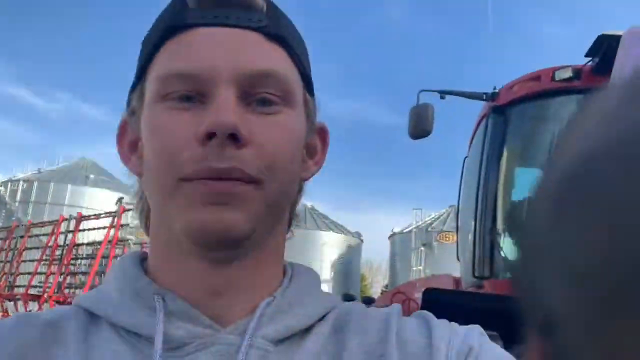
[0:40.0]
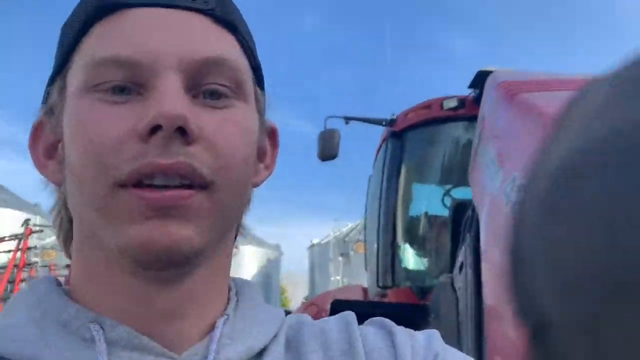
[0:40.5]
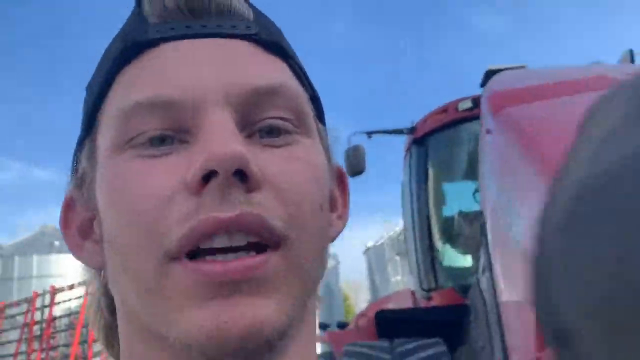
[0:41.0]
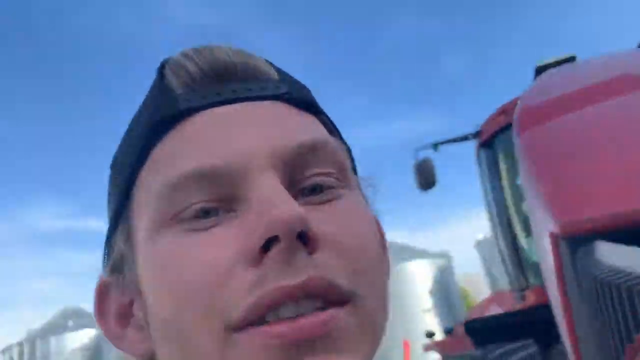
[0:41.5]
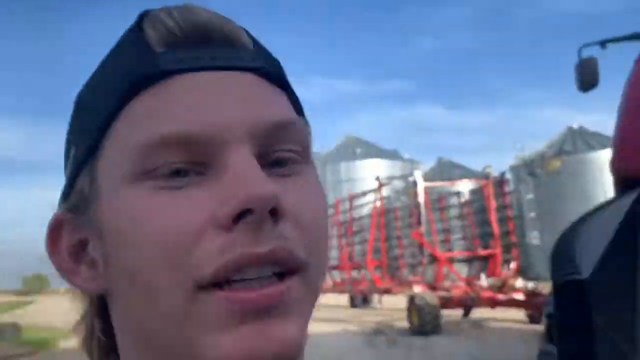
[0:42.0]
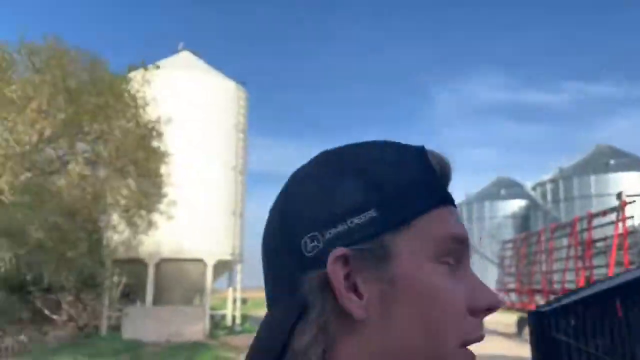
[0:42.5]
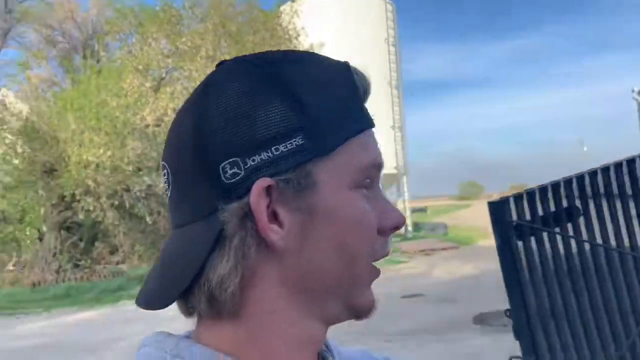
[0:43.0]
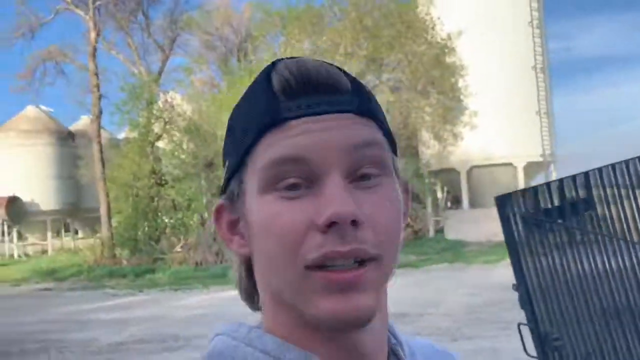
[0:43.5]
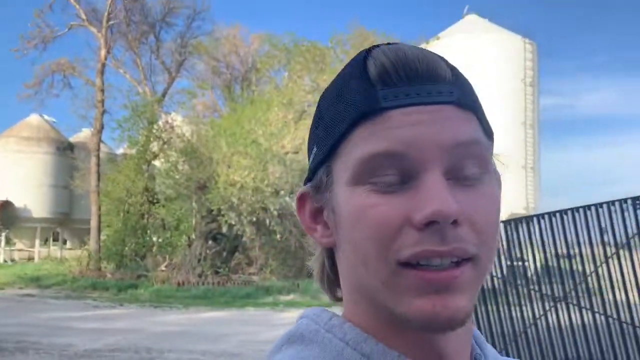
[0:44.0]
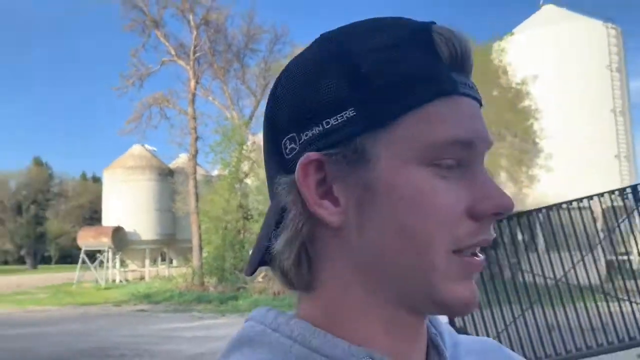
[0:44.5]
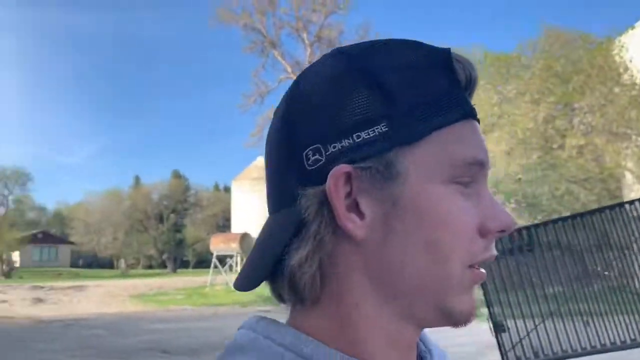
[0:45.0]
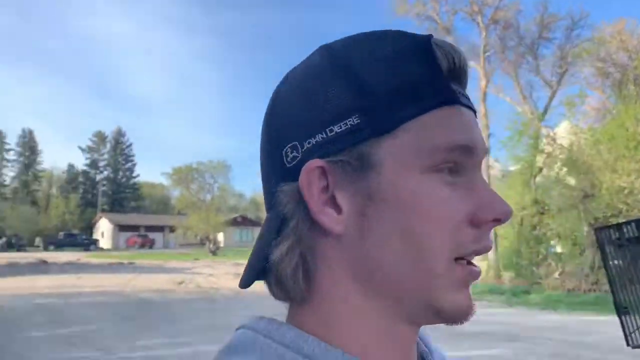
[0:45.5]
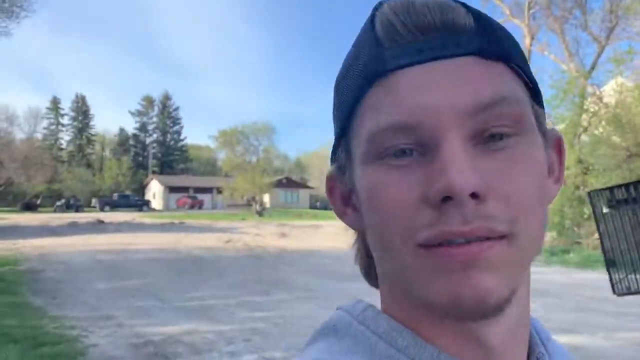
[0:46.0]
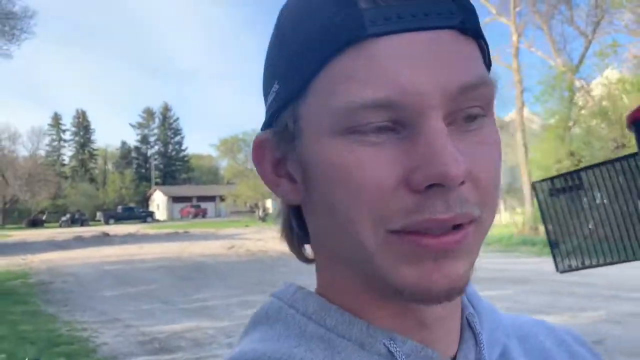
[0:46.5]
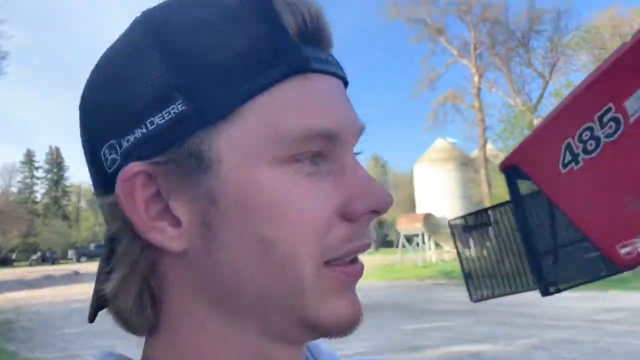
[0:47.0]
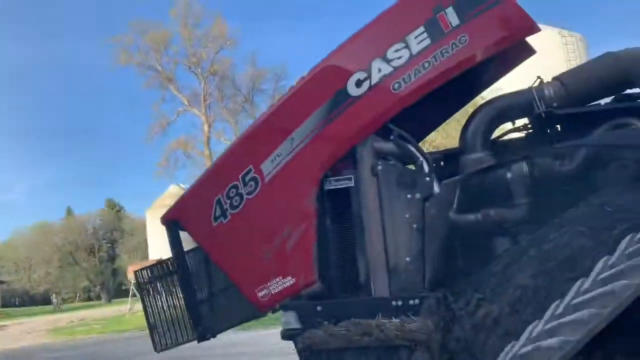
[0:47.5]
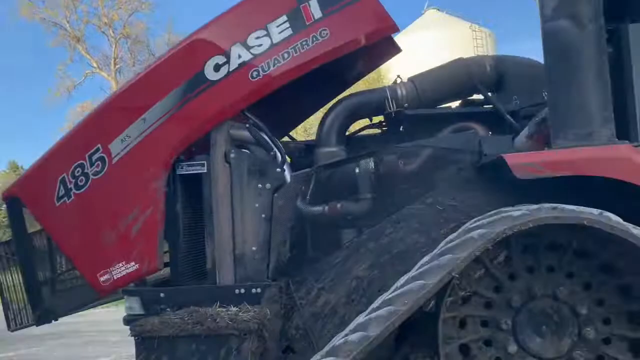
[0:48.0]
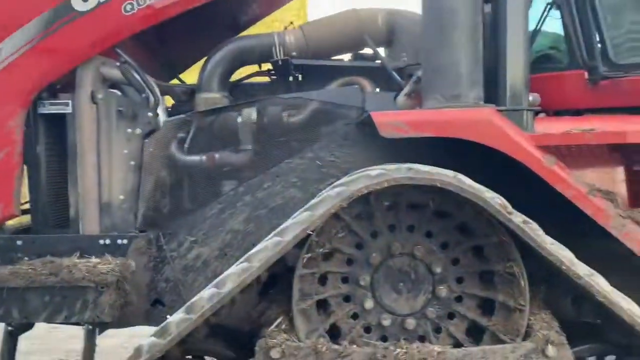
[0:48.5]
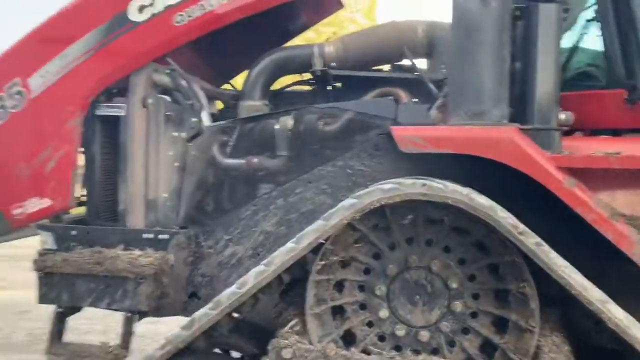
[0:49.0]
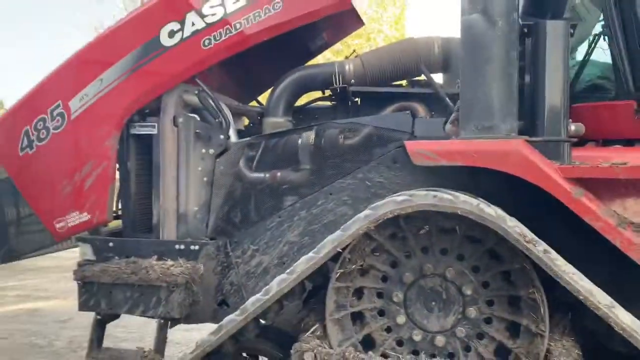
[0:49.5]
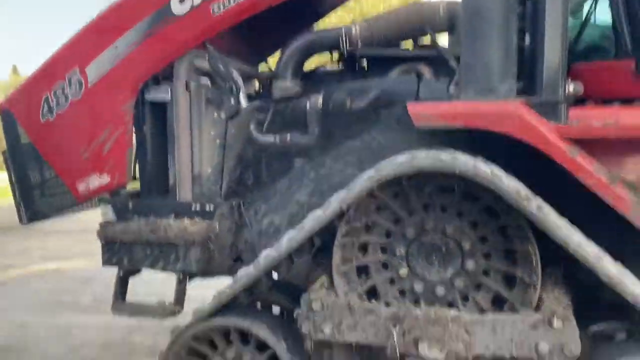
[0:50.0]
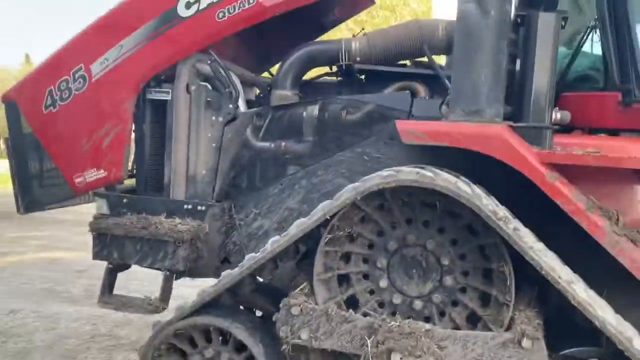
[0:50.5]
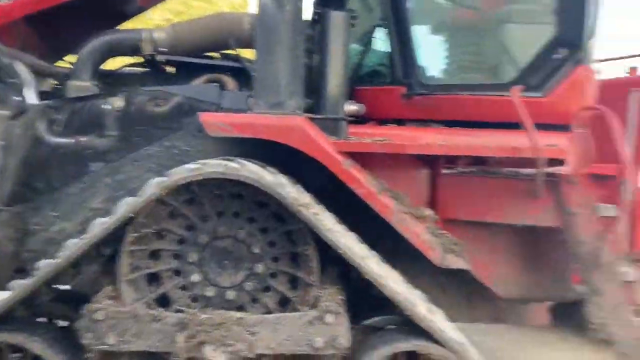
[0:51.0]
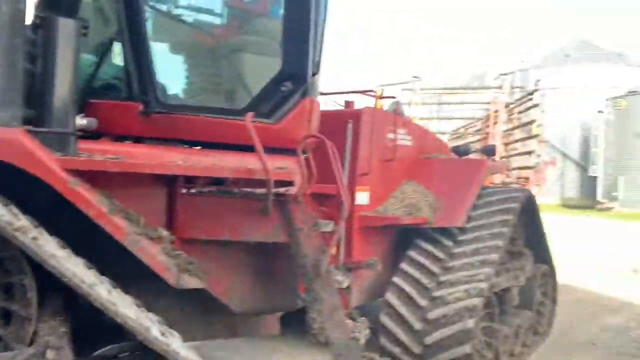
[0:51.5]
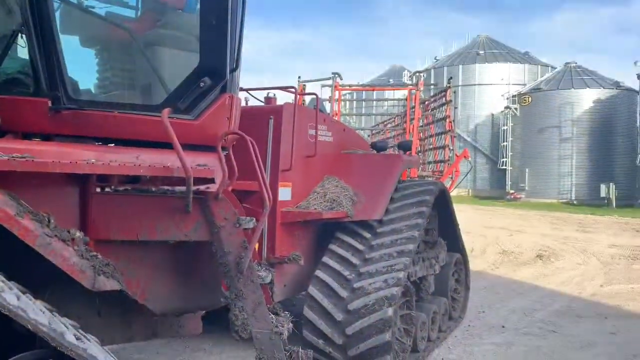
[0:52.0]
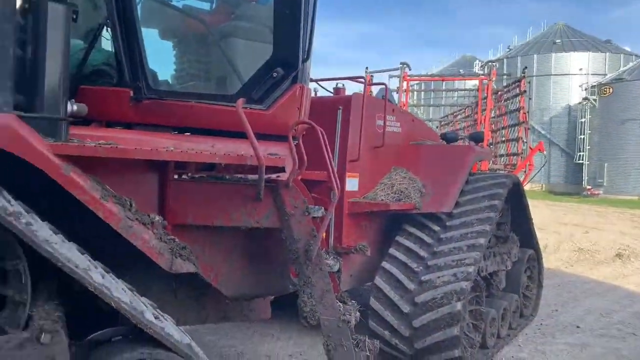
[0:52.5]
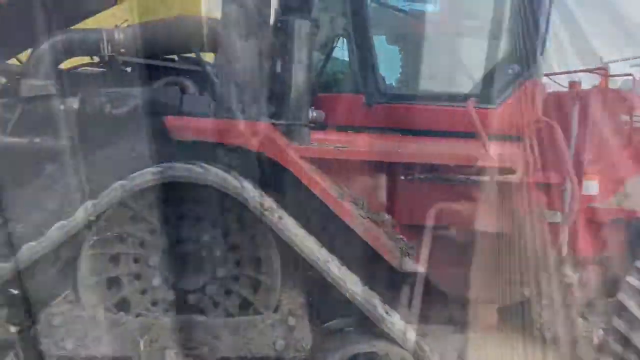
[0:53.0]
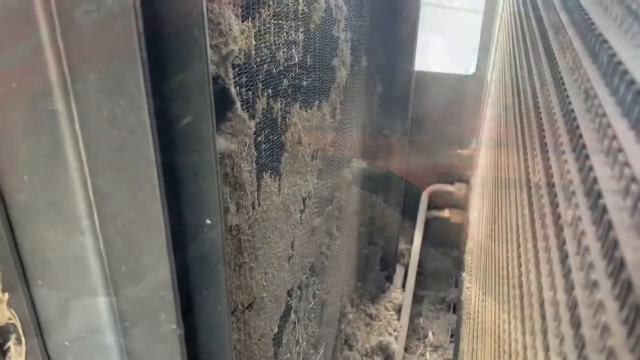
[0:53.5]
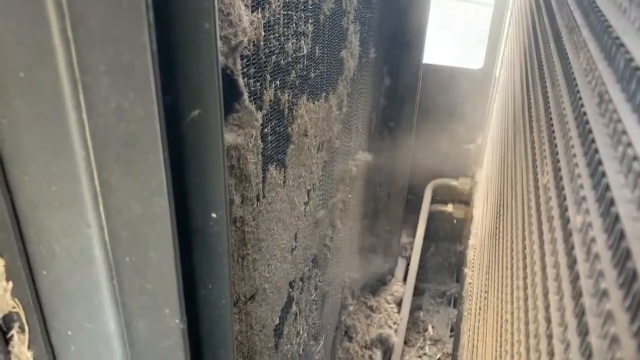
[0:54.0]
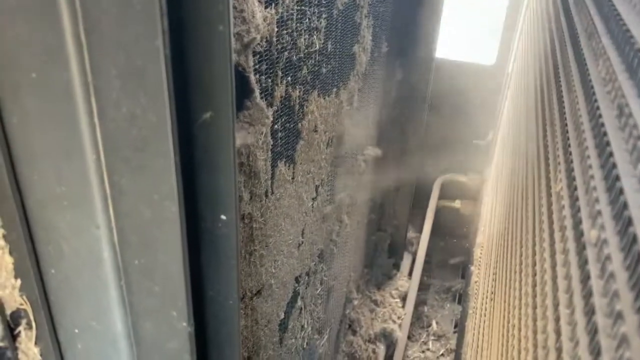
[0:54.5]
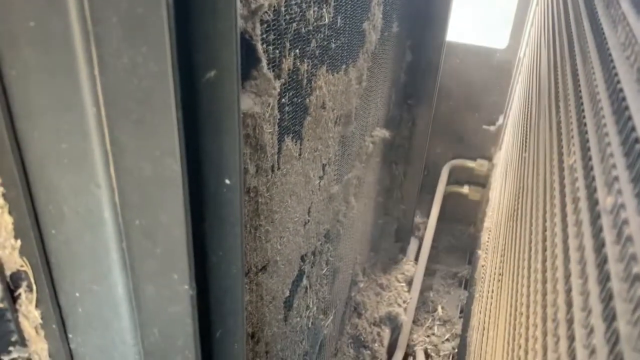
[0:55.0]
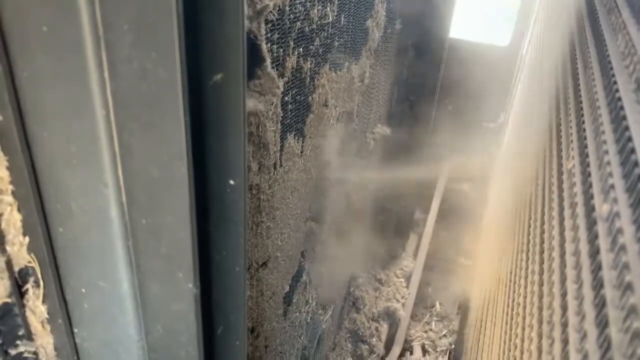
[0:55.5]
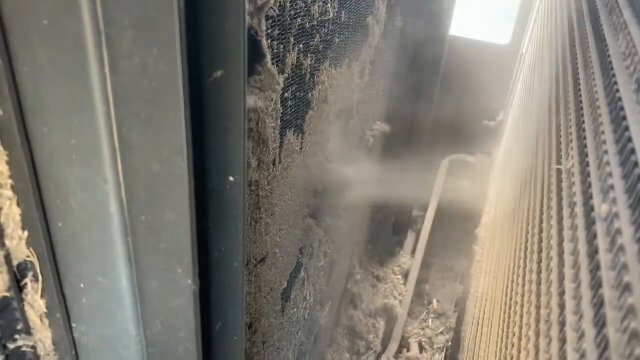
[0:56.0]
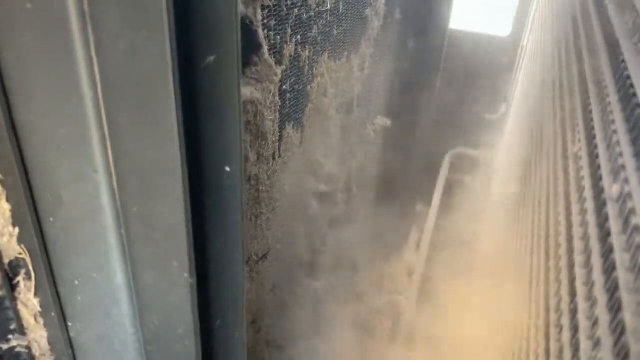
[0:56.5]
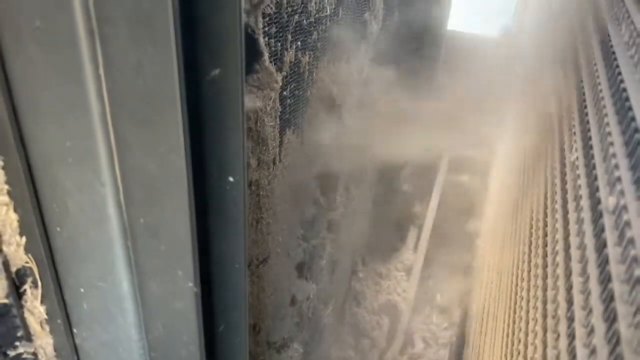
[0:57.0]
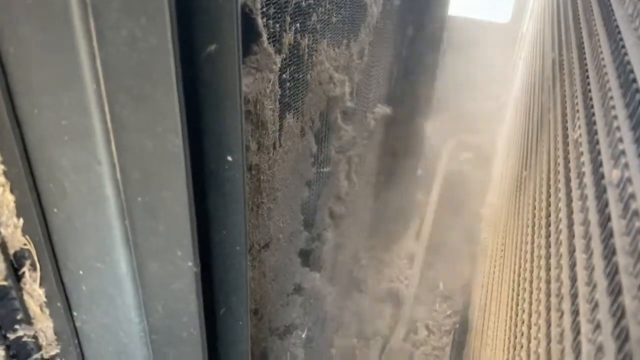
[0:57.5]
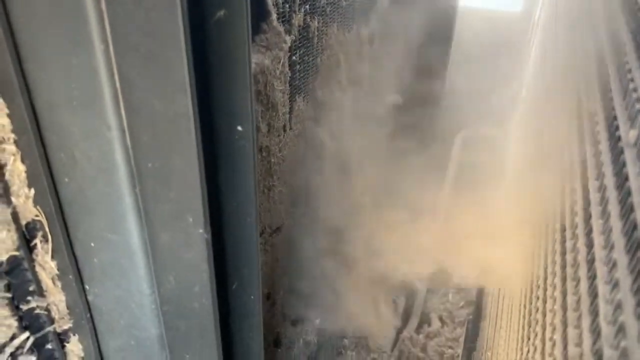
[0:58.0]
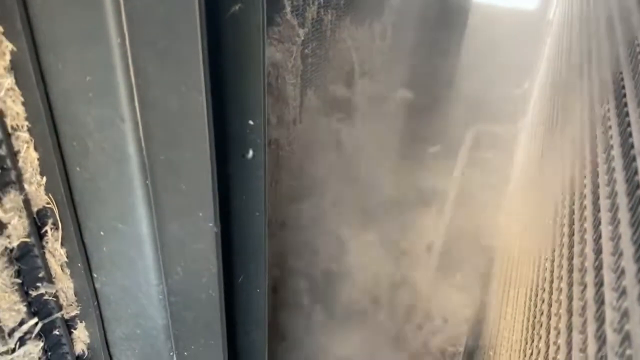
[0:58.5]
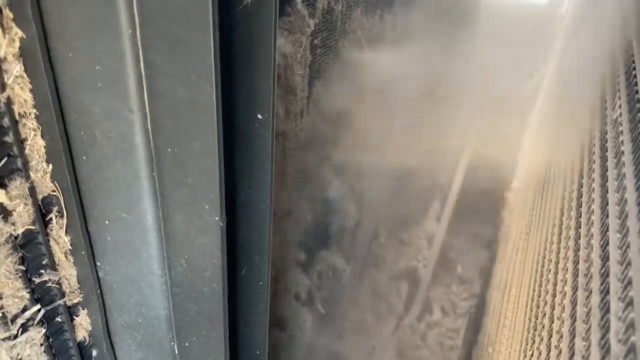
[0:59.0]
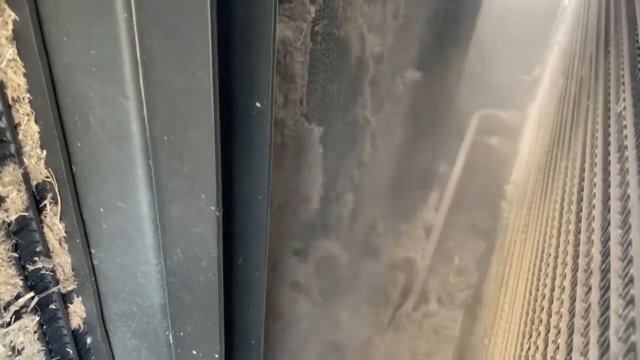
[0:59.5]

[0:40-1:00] A man's face is on the left side, up really close. He wears a black baseball cap backwards, has blonde hair, and wears a light gray sweater. The tractor is in the background to the right. The man walks around the tractor while holding the camera, and large trees are in the background, with a house in the distance to the left. He faces the camera toward the tractor and continues to look at it. An inside view shows what looks like the filter or radiator of the tractor, with a strong, powerful mist coming from the left side and blowing out the dirt, debris and what looks like dead grass from it.